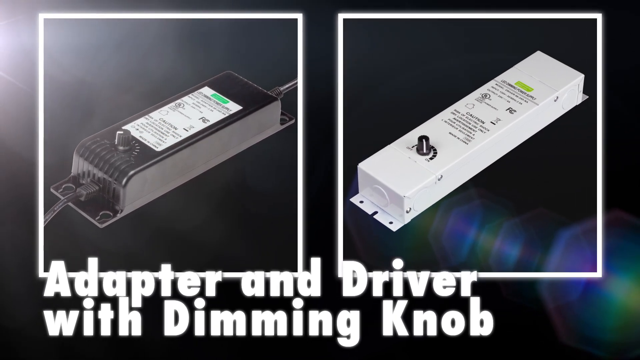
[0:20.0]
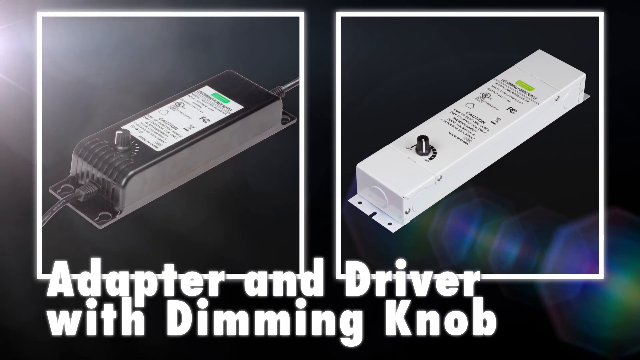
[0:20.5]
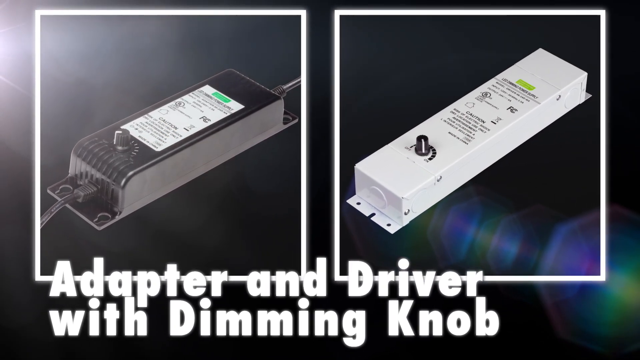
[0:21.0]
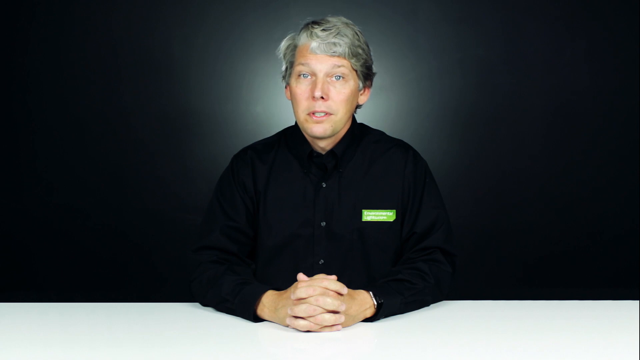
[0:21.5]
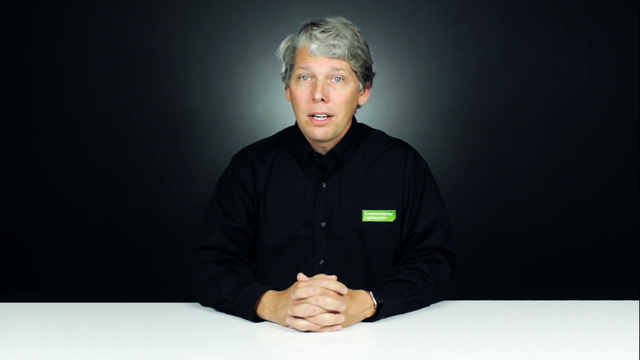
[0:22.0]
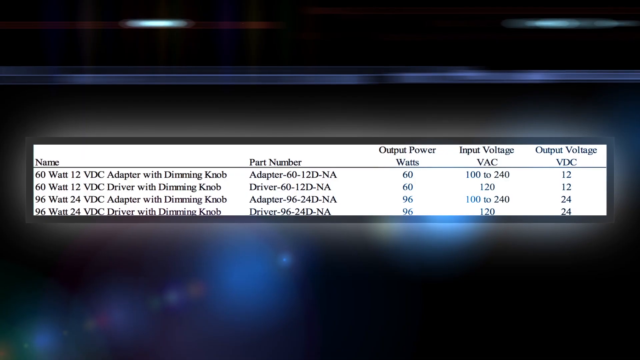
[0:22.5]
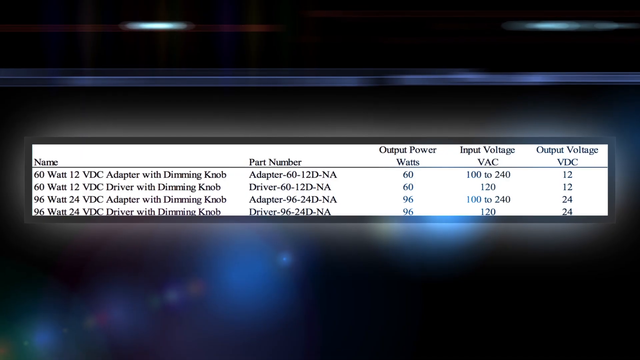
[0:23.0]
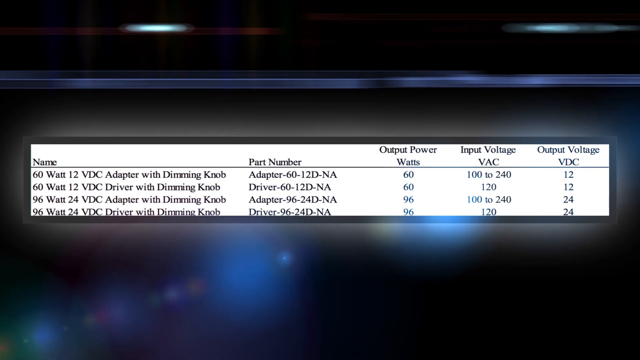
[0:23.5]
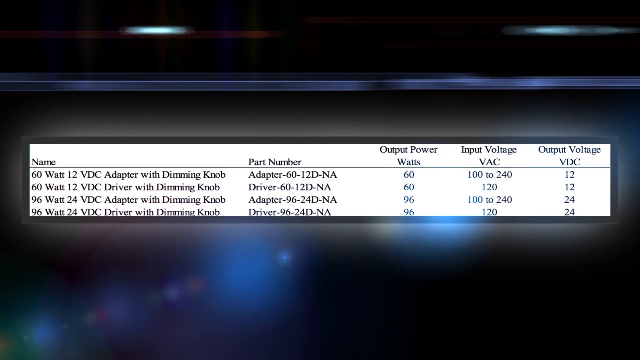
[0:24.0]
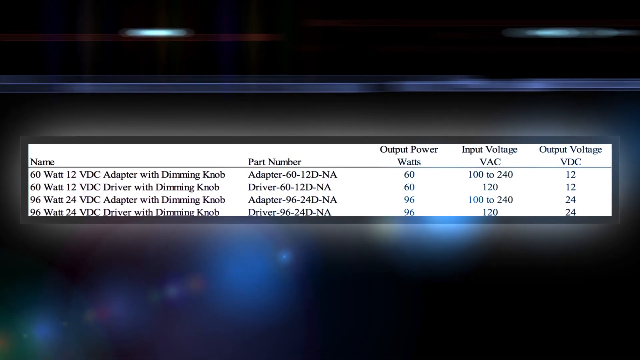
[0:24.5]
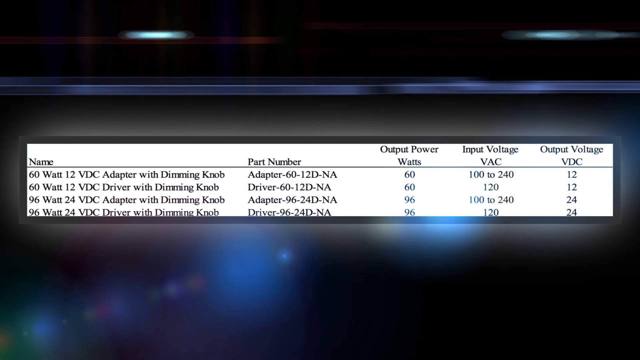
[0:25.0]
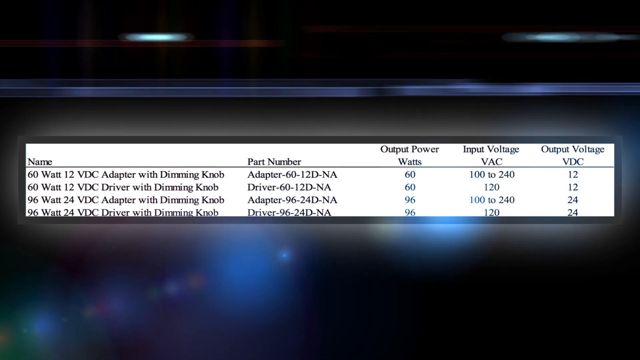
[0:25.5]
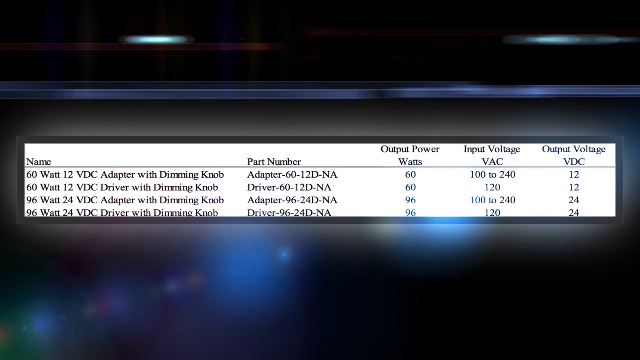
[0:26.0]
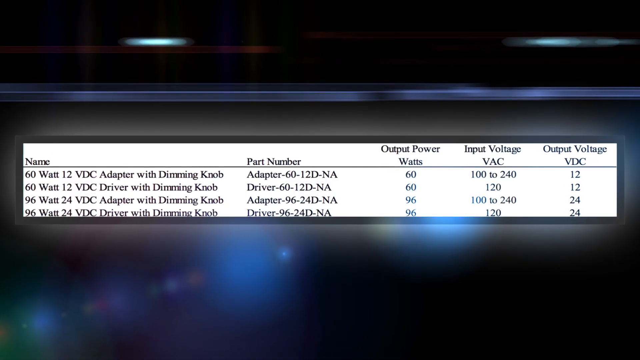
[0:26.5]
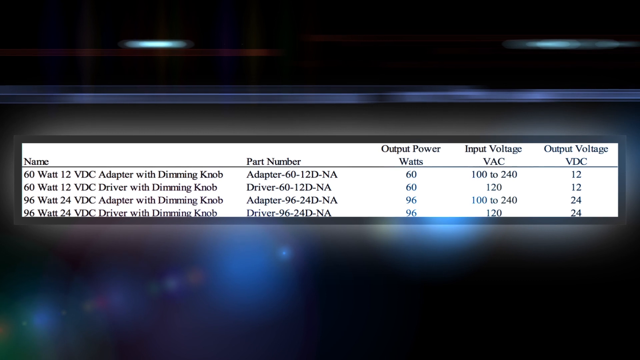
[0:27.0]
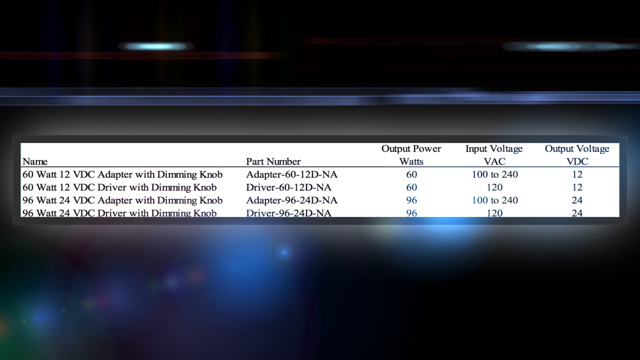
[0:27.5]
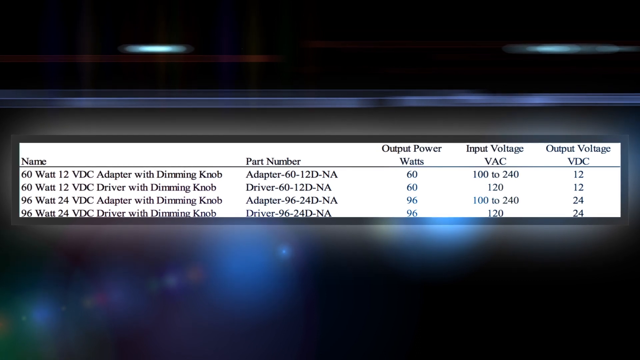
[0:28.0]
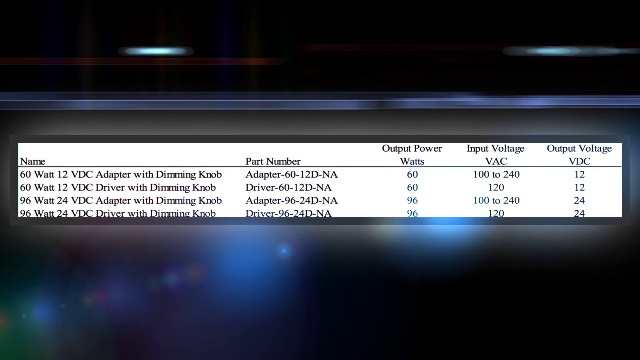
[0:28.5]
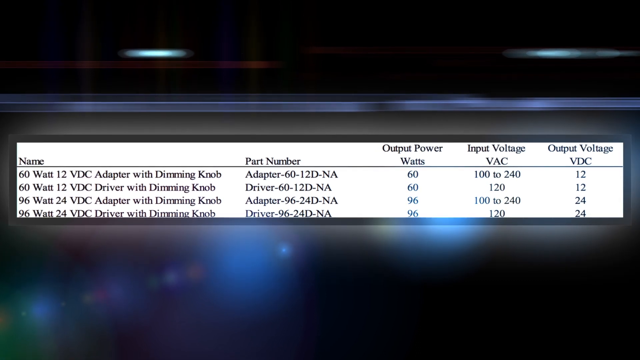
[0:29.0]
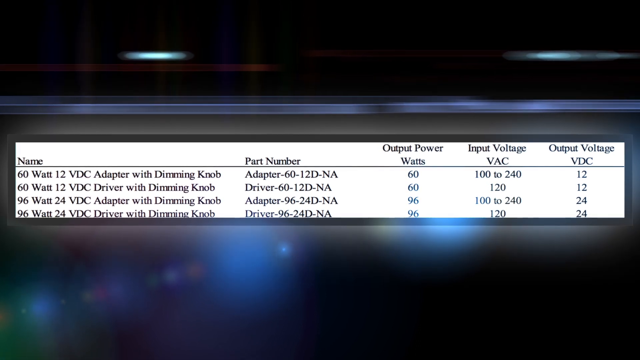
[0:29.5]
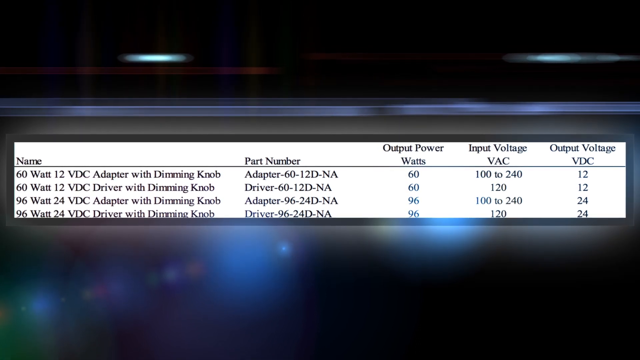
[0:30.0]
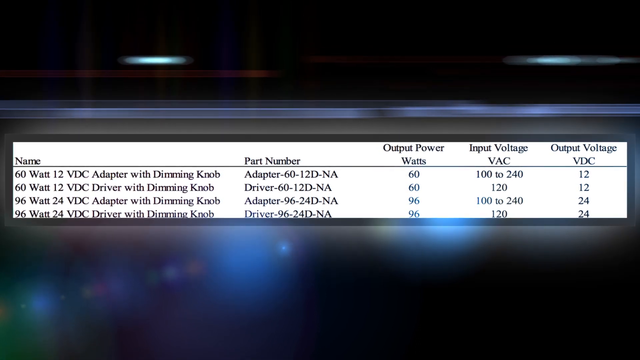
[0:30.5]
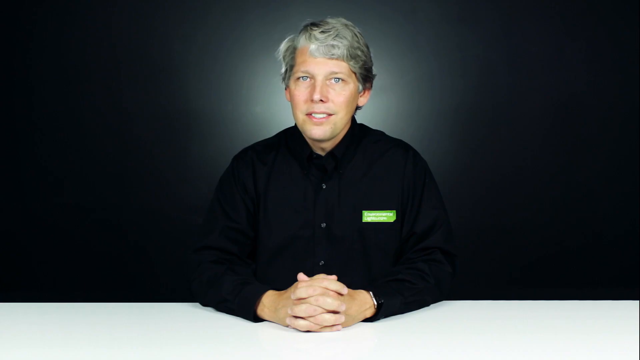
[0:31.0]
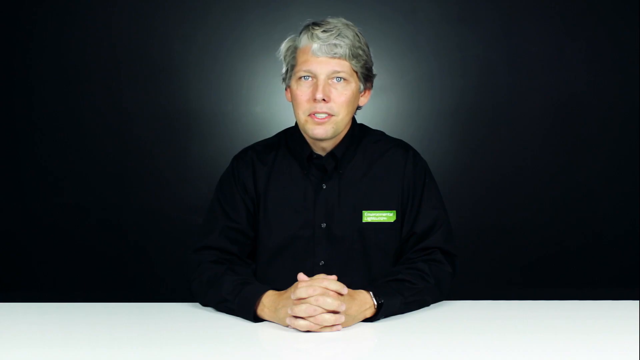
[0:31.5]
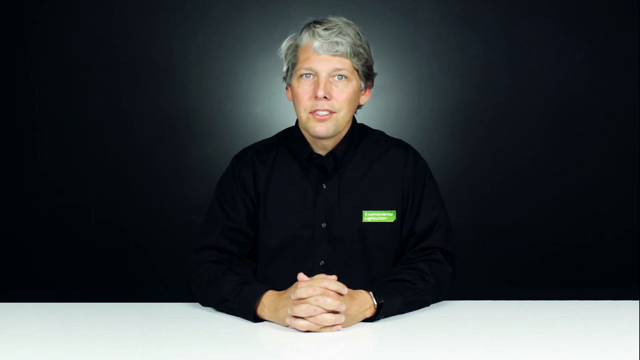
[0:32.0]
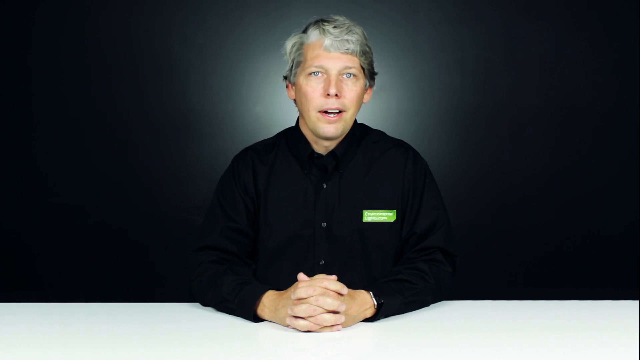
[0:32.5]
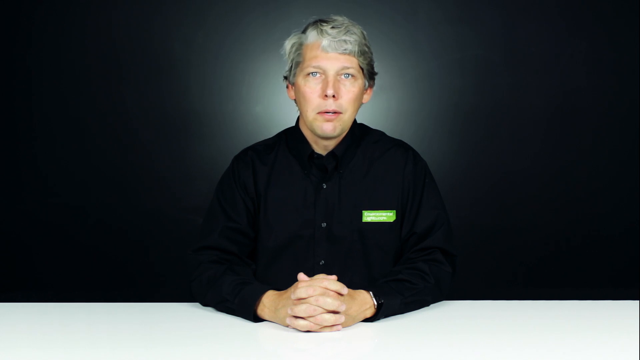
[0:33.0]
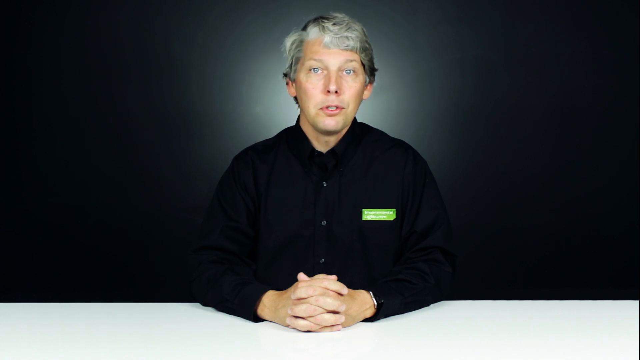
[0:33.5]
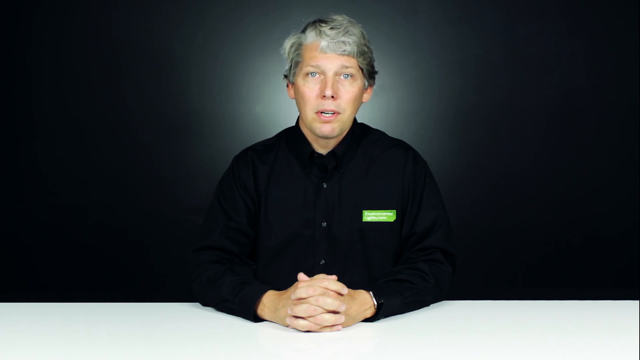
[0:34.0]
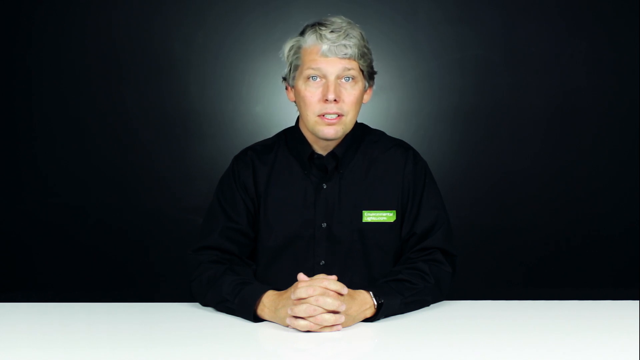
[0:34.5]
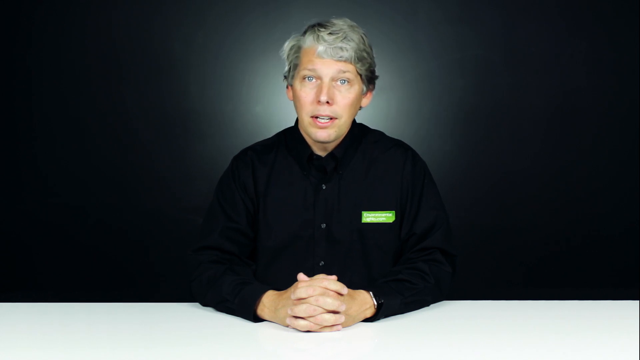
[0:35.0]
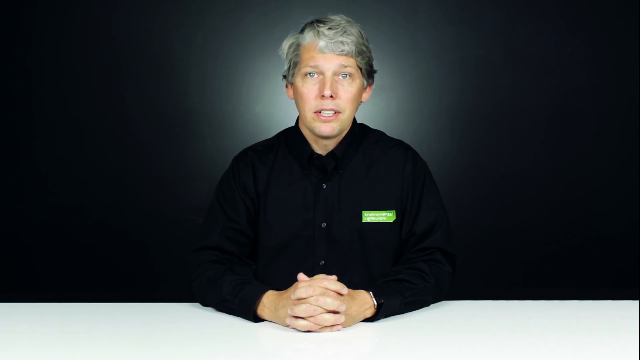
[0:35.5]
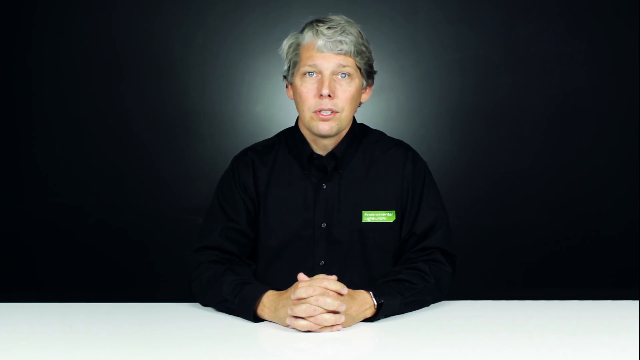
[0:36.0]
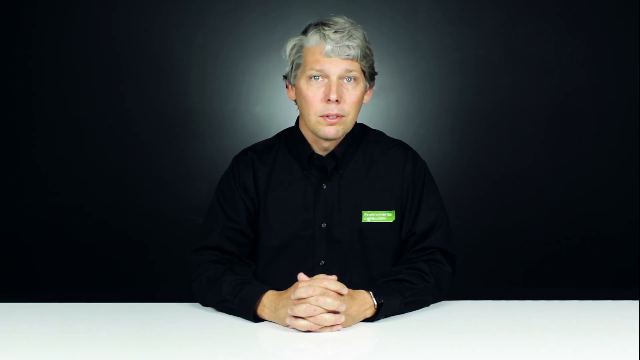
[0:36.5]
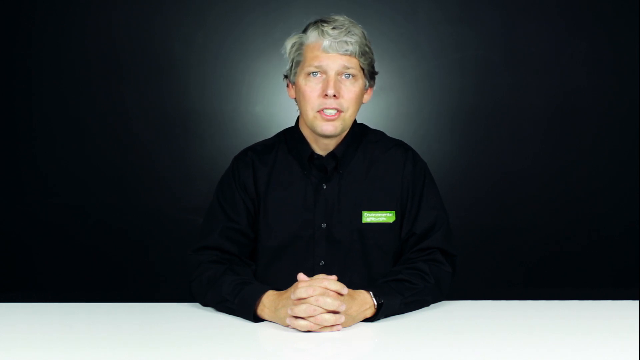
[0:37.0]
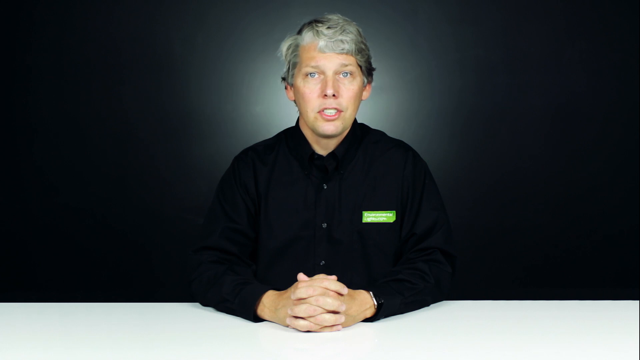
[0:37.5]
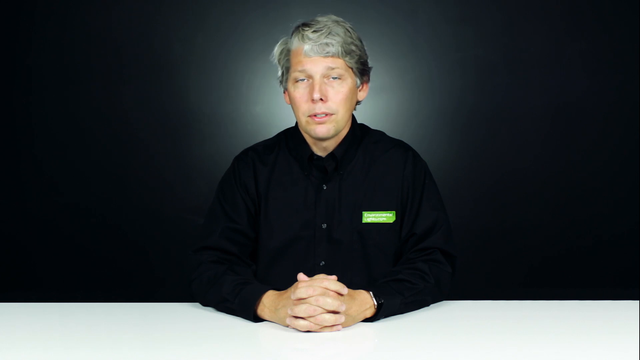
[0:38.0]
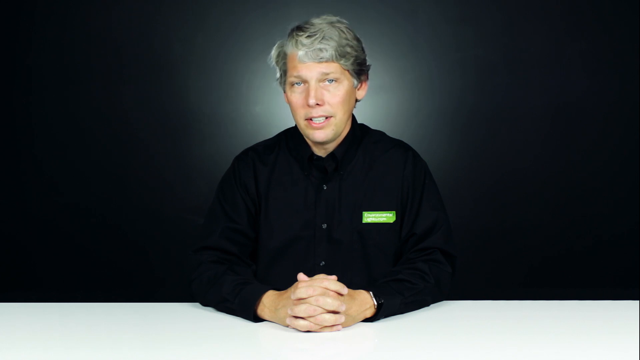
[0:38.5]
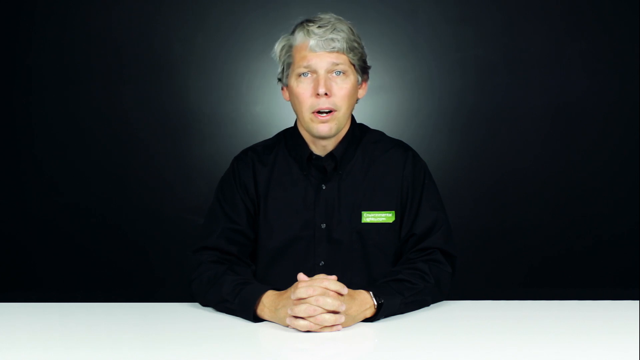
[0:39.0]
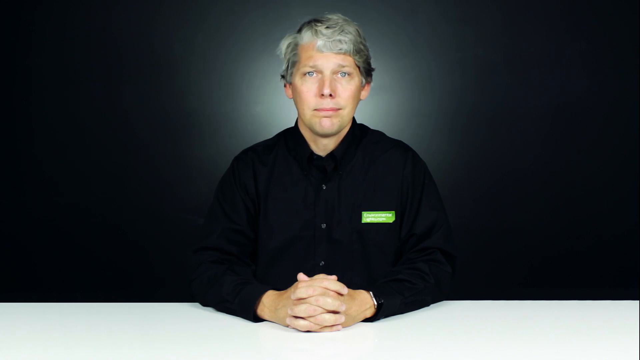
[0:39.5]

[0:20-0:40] A person wearing a black t-shirt is shown with an adapter and a driver with a dimmer. There are two items: the adapter seems to be black and the driver seems to be white.